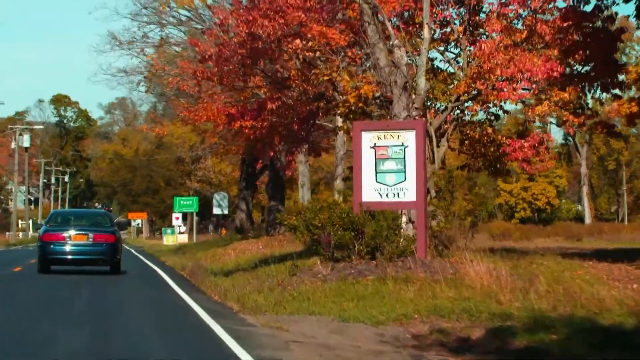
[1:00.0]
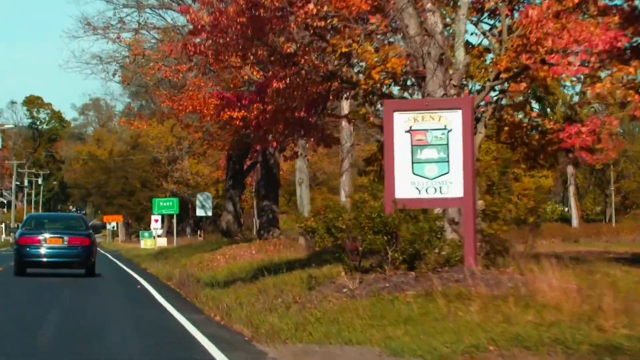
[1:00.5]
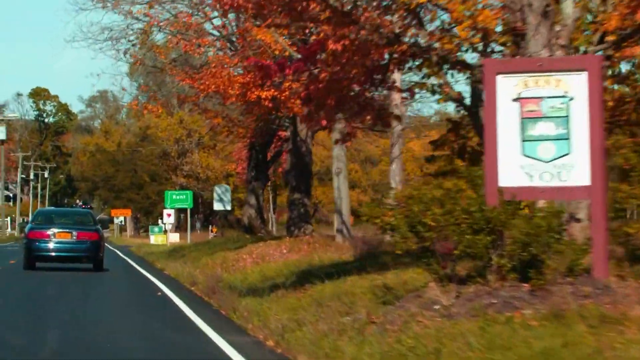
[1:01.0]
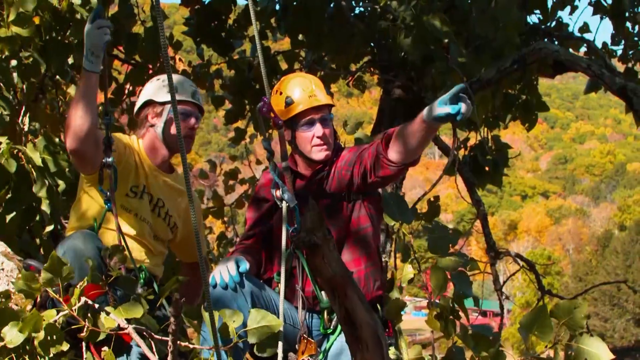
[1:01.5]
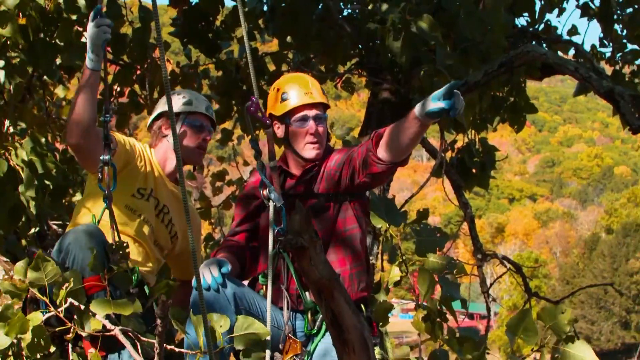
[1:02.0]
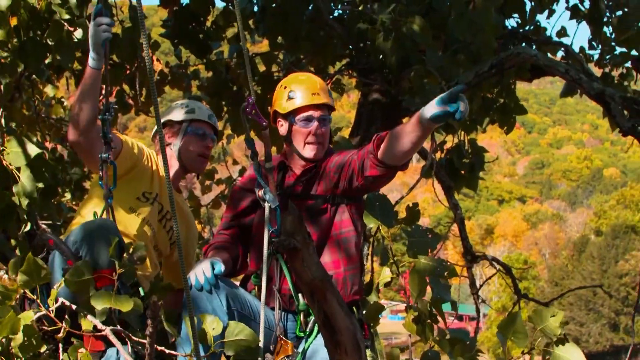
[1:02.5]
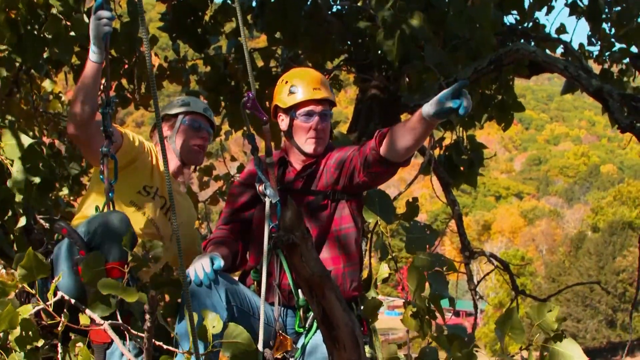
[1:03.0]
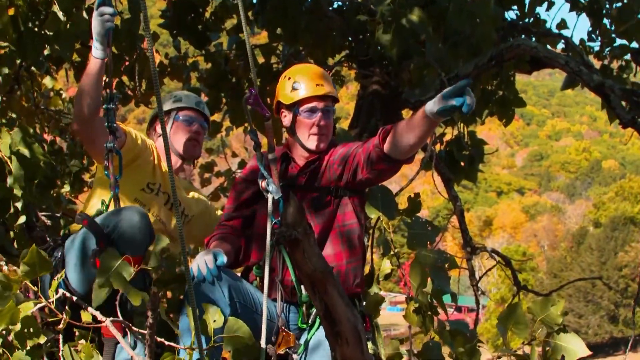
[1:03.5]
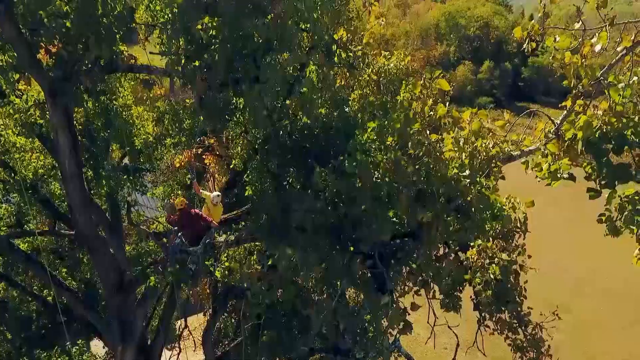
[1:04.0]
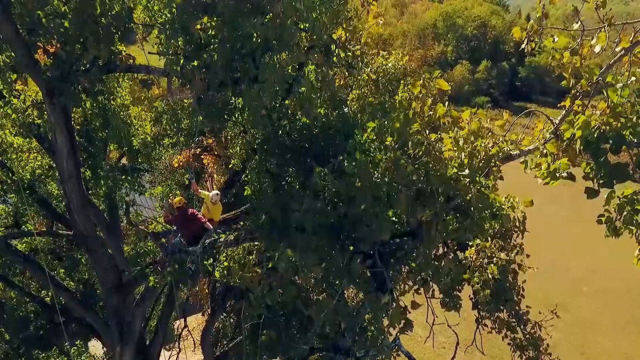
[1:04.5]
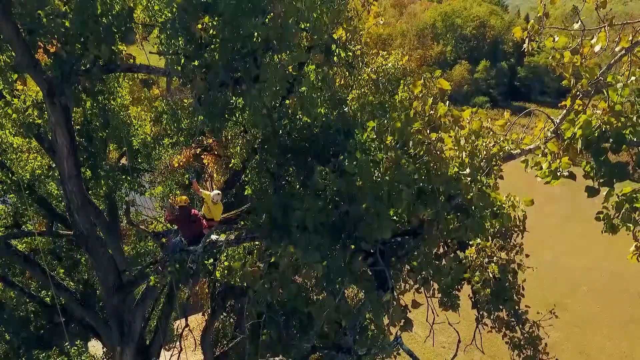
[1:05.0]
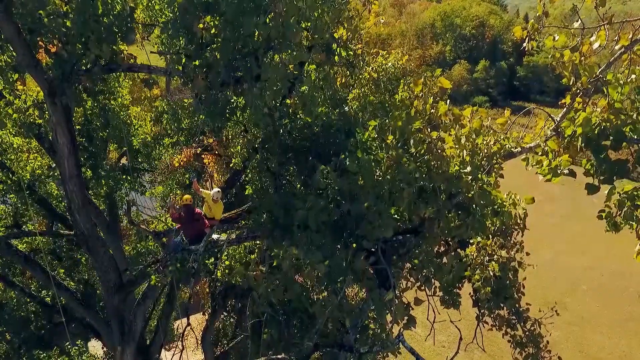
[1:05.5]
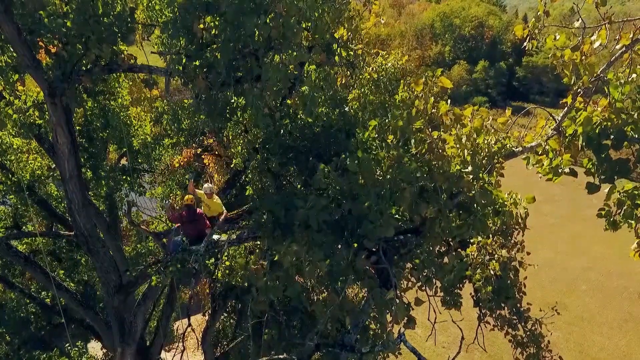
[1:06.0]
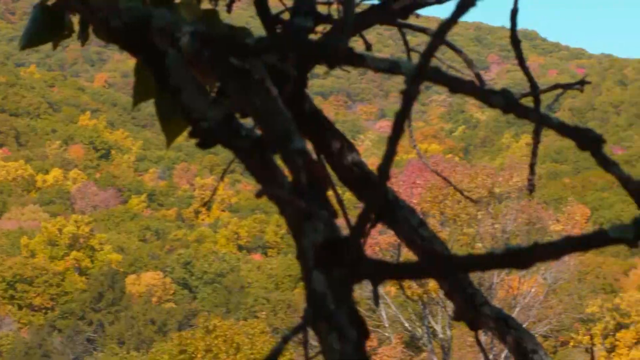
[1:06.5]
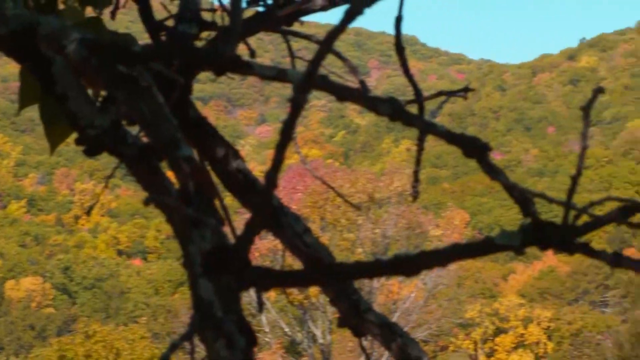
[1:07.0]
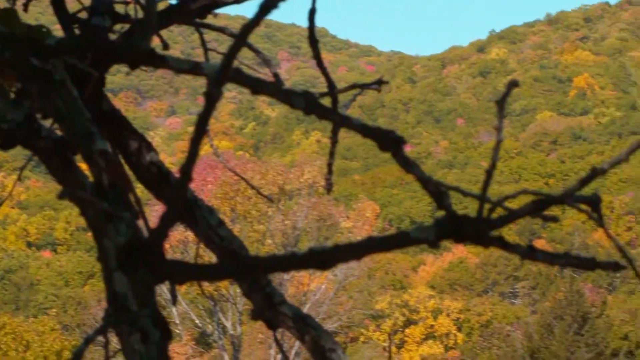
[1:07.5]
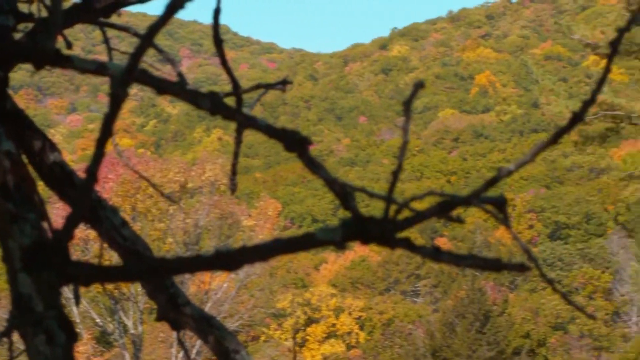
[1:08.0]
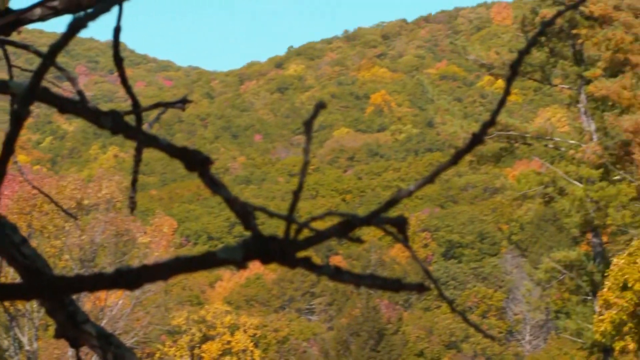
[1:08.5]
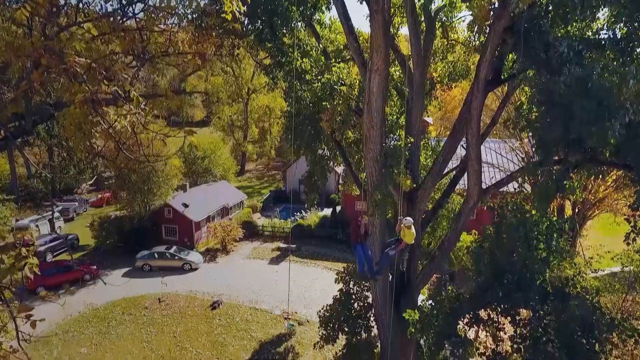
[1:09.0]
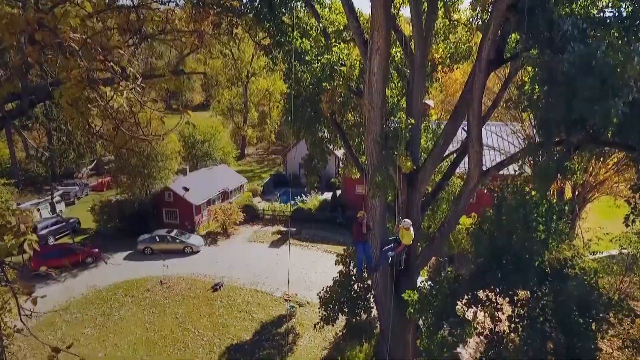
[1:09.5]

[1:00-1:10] A dark-coloured car drives away from the camera. On the right-hand side is a wooden sign with a coat of arms on a white background, in a brown wooden frame on a wooden post. Autumn-coloured trees are behind it, and more signs, including a rectangular green sign, are visible down the right-hand side of the road. Two men wear climbing helmets: the man on the left a white helmet and the man on the right a yellow helmet. One wears a bright yellow T-shirt with writing on it and one wears a checked shirt. Both wear gloves and climbing harnesses, and the man on the right points to the right side of the screen. Trees are in the background.